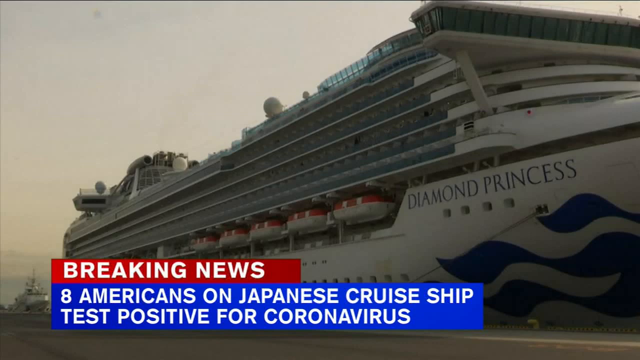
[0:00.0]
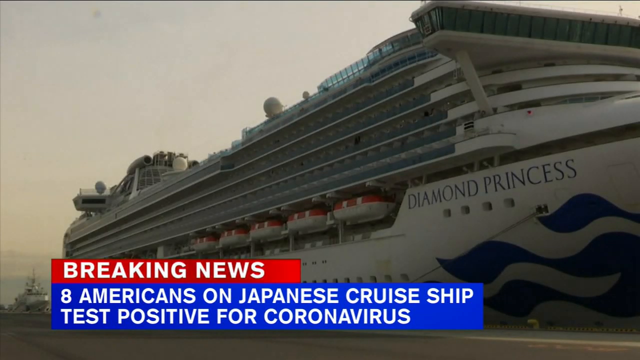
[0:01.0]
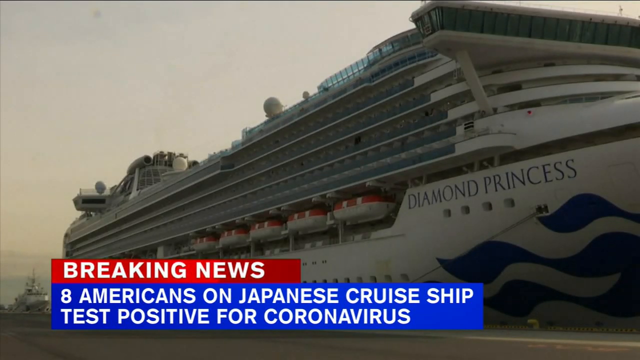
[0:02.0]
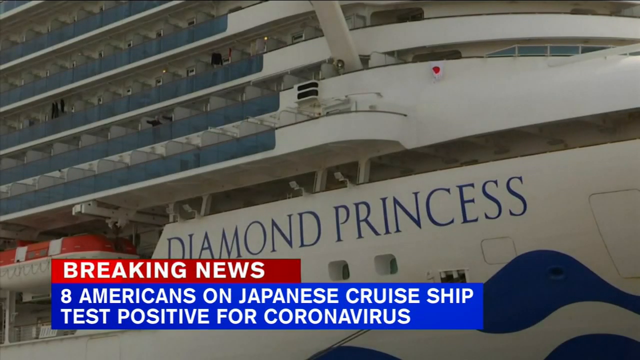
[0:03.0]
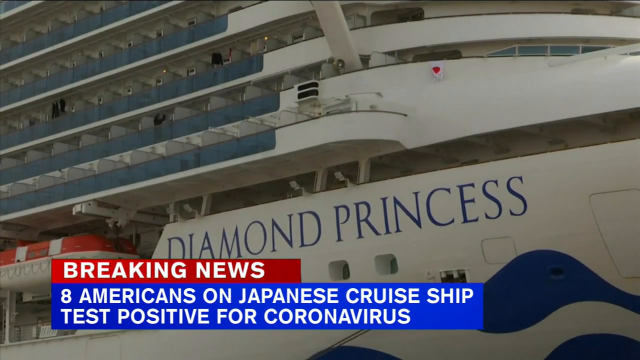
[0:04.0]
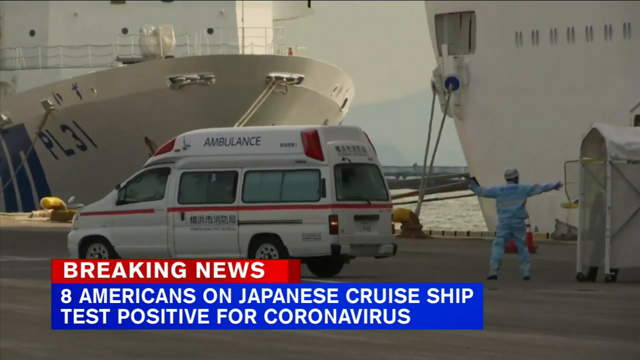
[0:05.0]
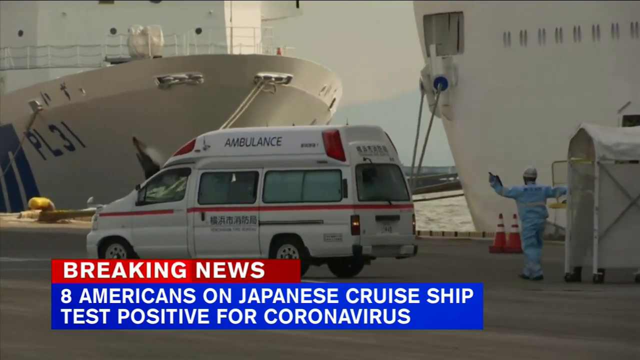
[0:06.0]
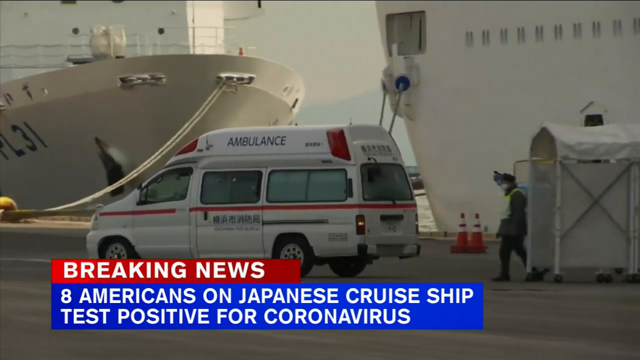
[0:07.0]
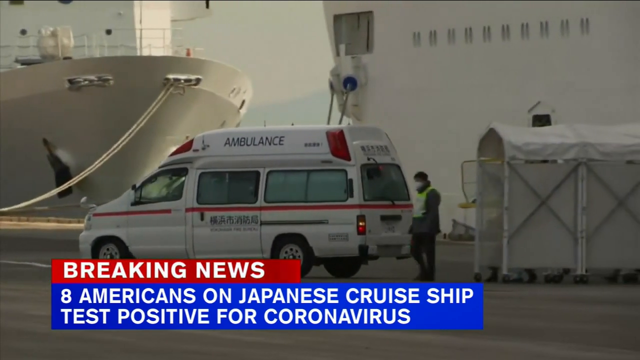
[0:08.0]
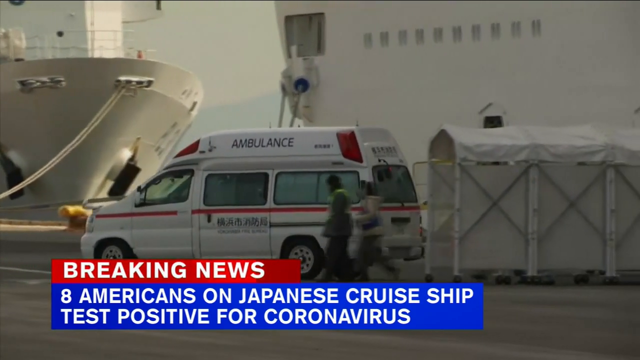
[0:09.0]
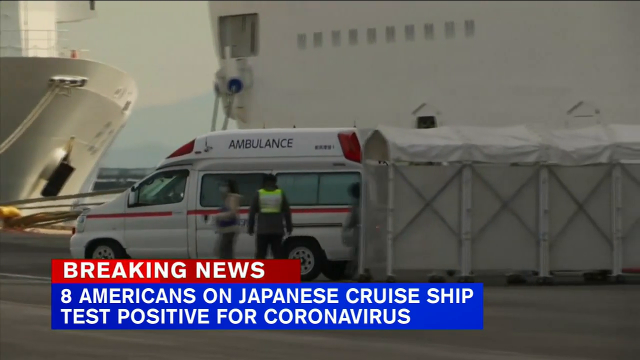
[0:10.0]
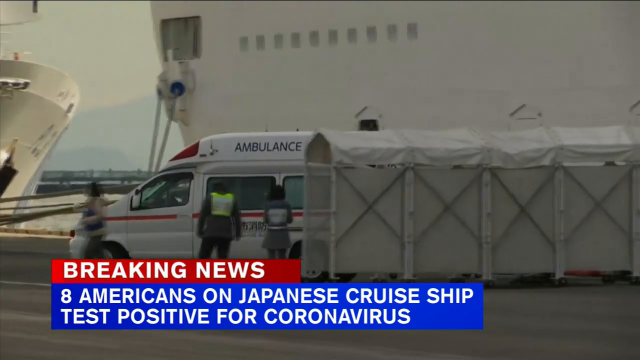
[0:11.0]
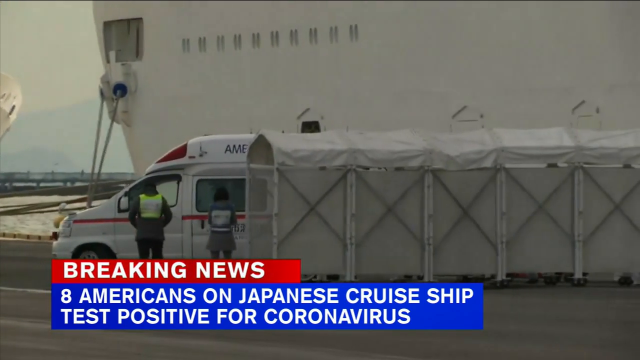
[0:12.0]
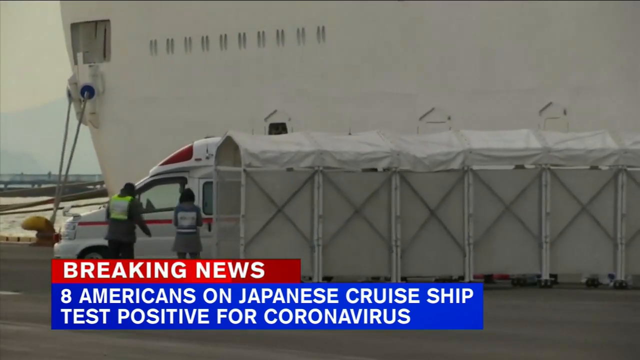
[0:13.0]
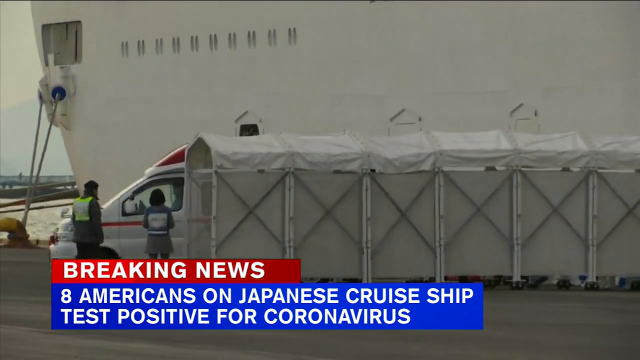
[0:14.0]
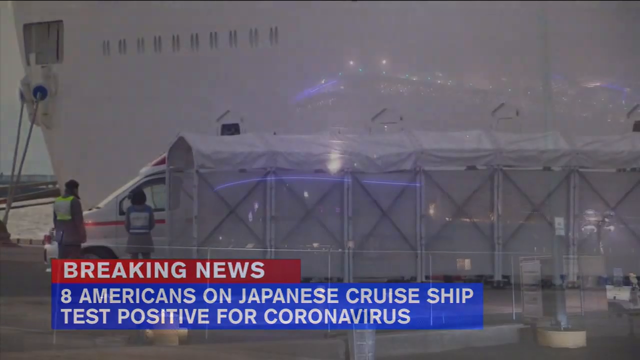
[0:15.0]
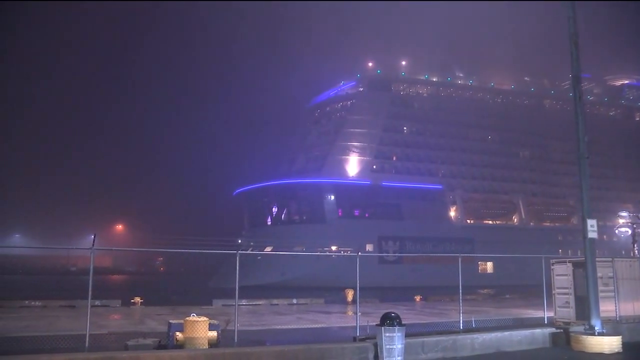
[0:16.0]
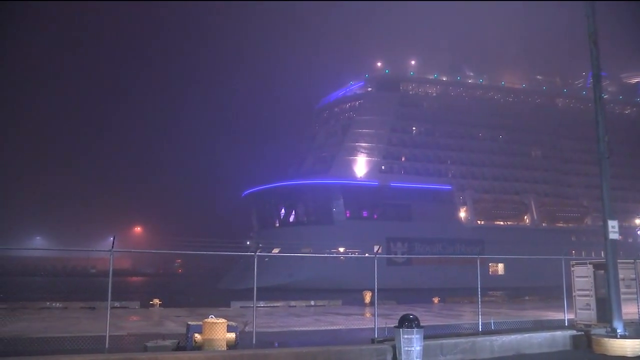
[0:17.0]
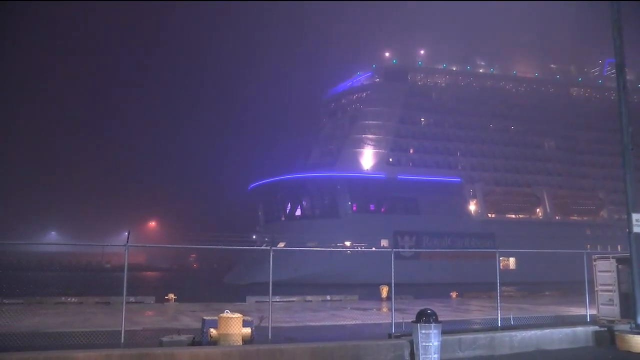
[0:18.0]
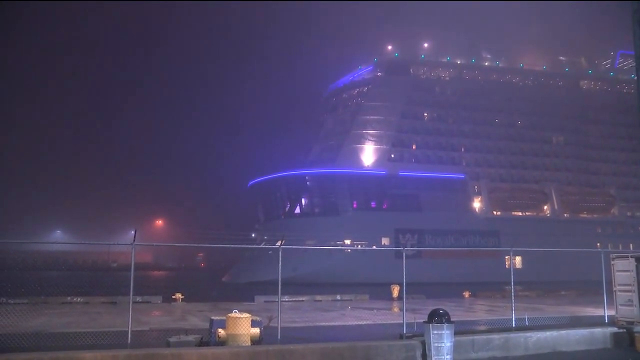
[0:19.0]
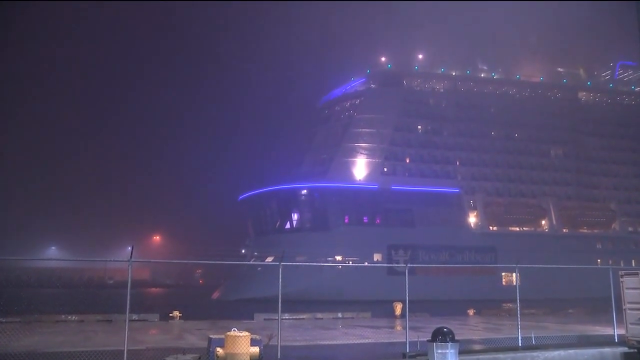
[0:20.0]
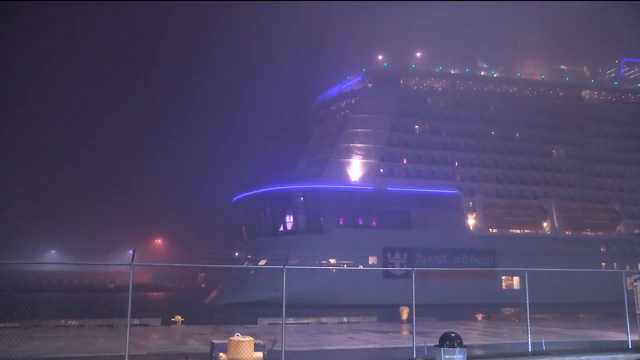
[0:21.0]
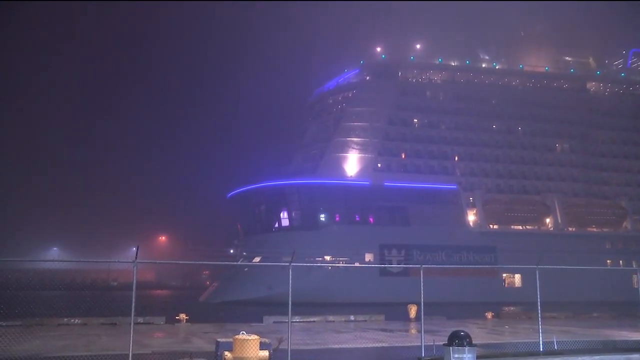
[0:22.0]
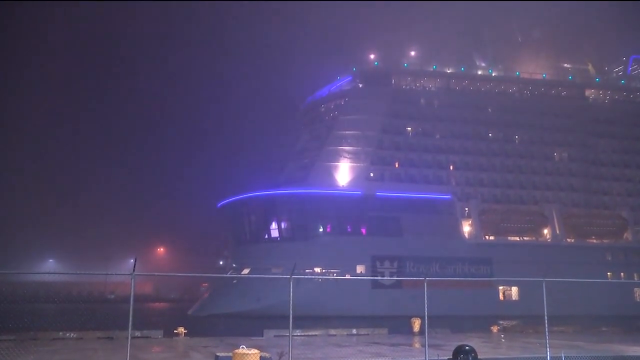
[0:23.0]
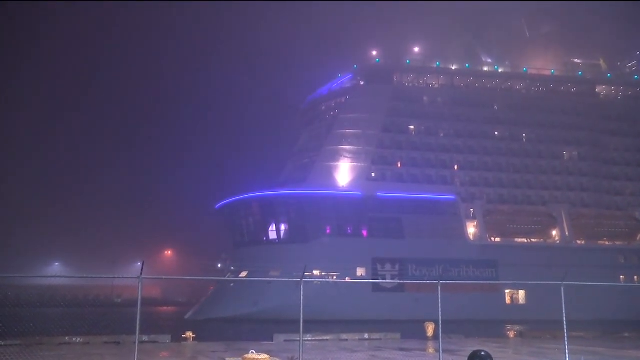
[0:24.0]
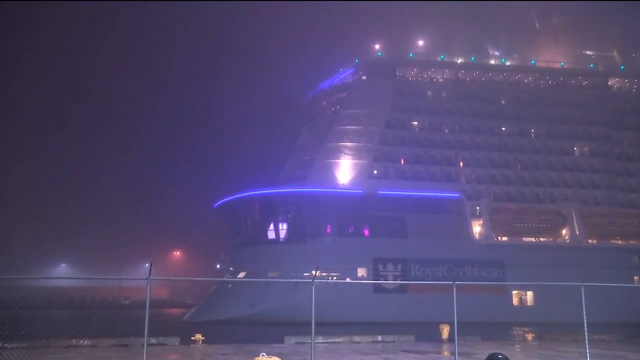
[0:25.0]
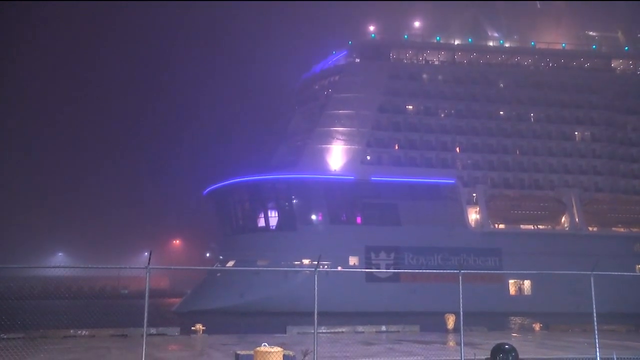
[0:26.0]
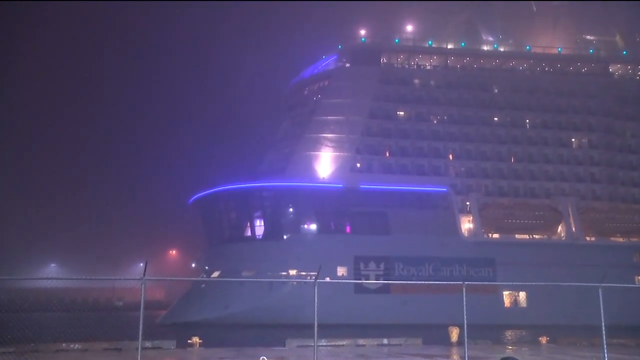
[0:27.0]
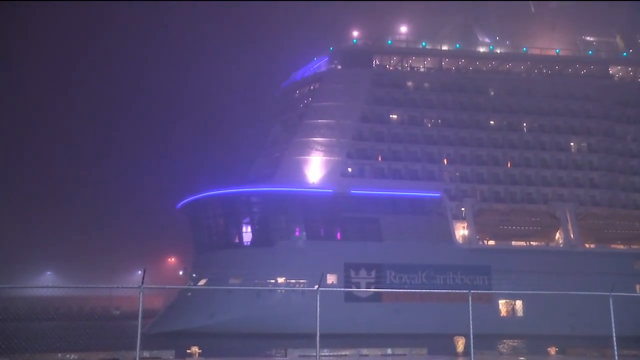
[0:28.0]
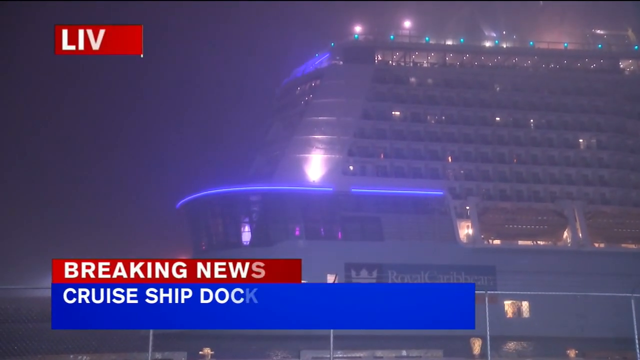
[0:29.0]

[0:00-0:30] A large cruise ship has "Diamond Princess" written on it. On screen, a message appears on a red and blue background: "breaking news" and "8 Americans on Japanese cruise ship test positive for coronavirus." A few people are next to a white ambulance that has Japanese characters and the word "ambulance" on each side. The people are dressed in what appears to be protective gear; one person in a light blue suit and another in a yellow vest are visible, and they seem to be waiting or directing the ambulance. The setting is a large open area on a clear, bright day. The shot changes from the ship to a close shot of the ambulance and personnel on the dock. The focus then shifts to a different cruise ship, the Anthem of the Seas, a Royal Caribbean cruise ship, at a port in Bayonne, New Jersey. It is night, or at least a very dark and foggy day. The ship is massive, with countless lighted windows and multiple decks, and the name "Anthem of the Seas" is bright in blue on each side.